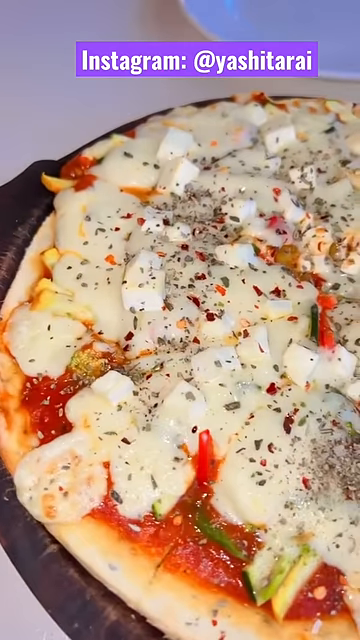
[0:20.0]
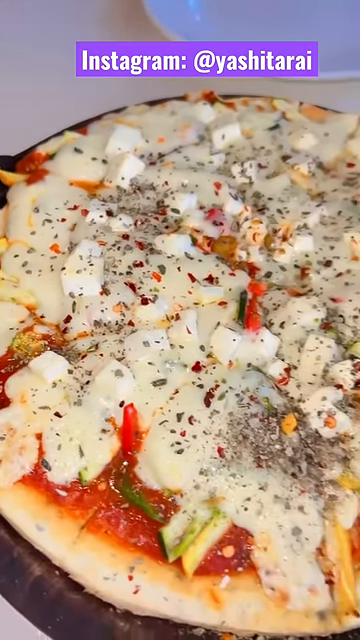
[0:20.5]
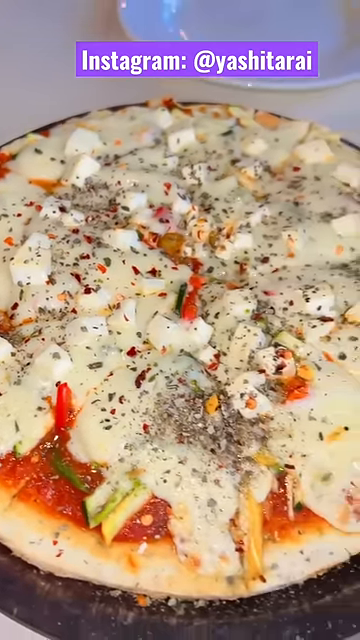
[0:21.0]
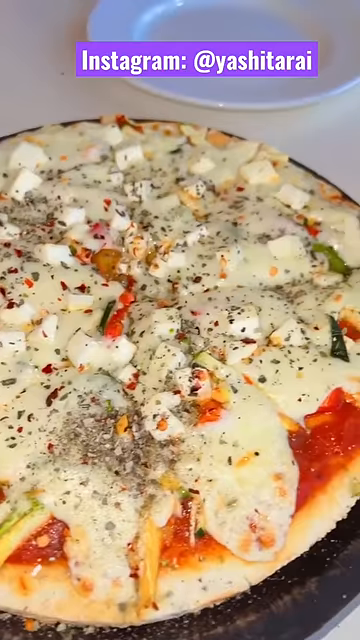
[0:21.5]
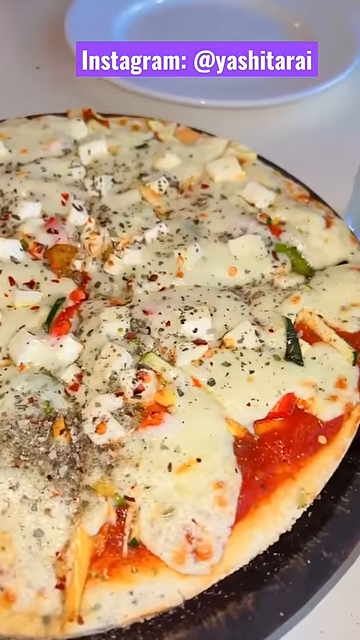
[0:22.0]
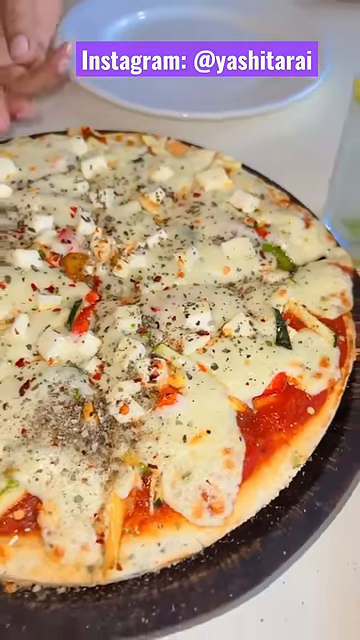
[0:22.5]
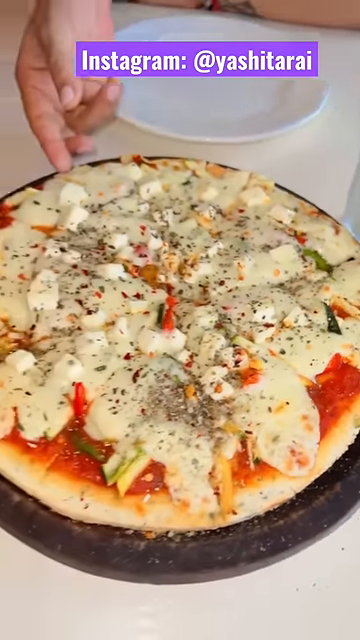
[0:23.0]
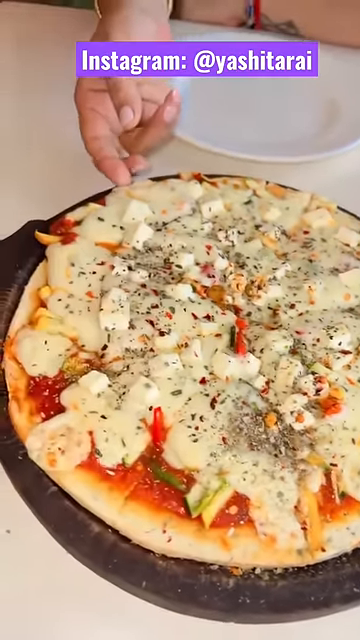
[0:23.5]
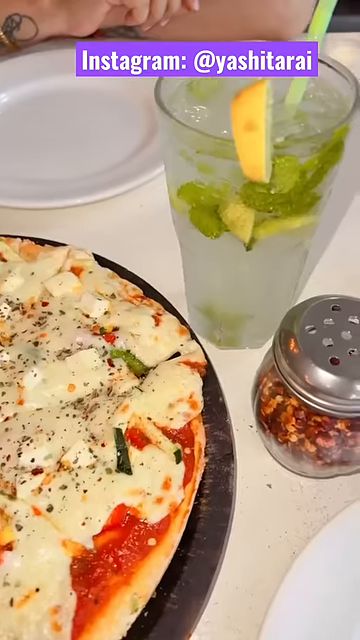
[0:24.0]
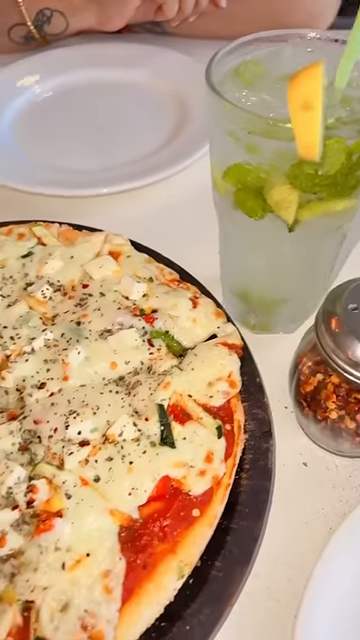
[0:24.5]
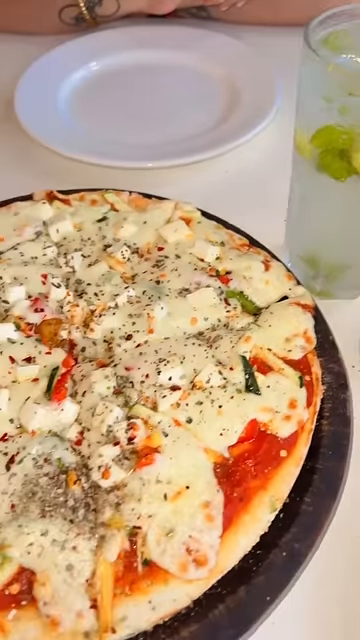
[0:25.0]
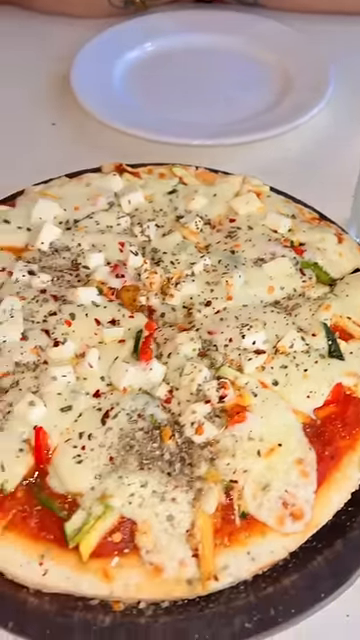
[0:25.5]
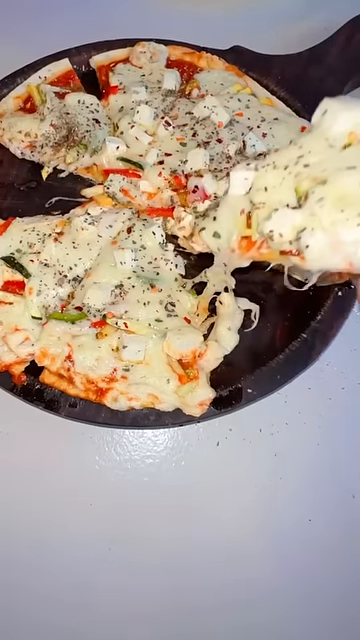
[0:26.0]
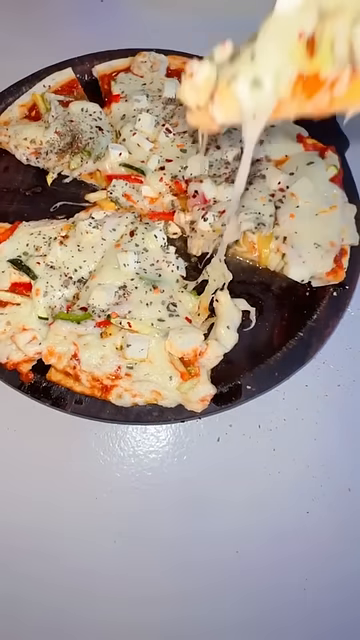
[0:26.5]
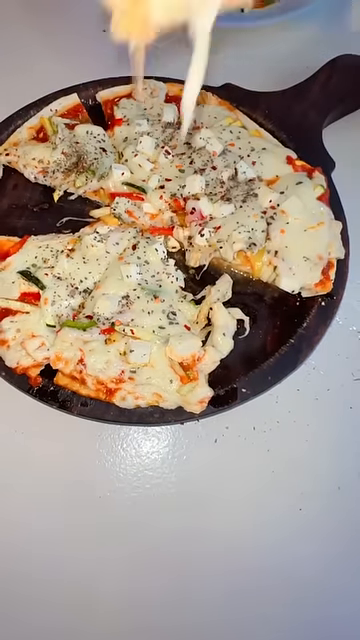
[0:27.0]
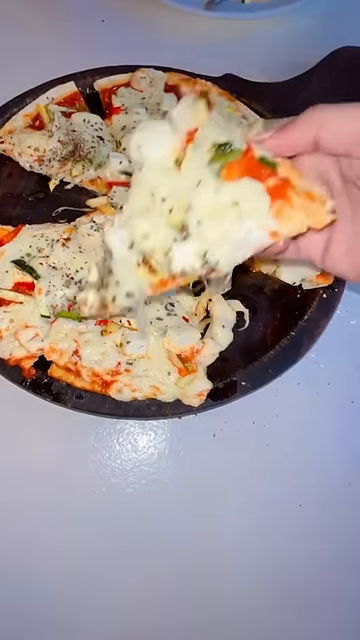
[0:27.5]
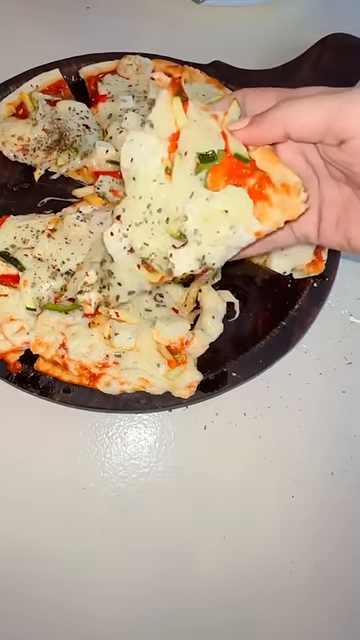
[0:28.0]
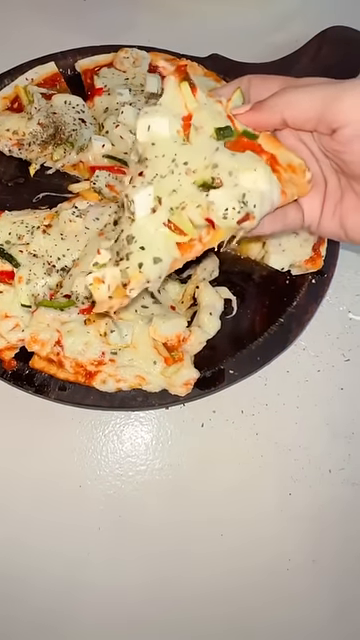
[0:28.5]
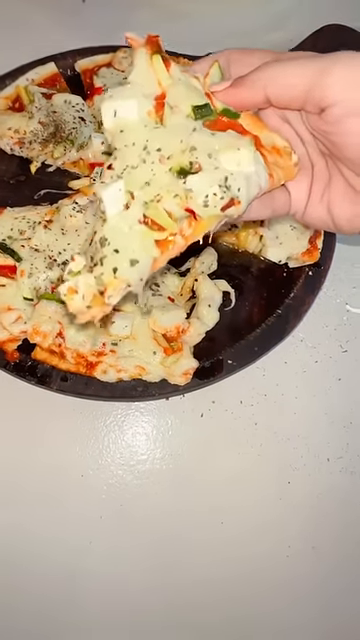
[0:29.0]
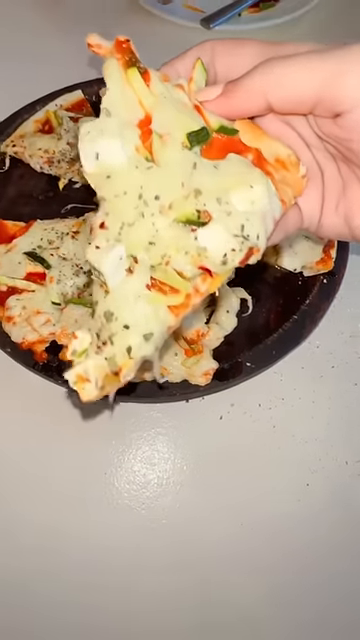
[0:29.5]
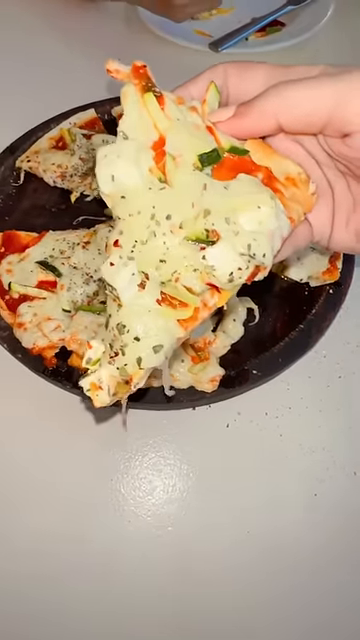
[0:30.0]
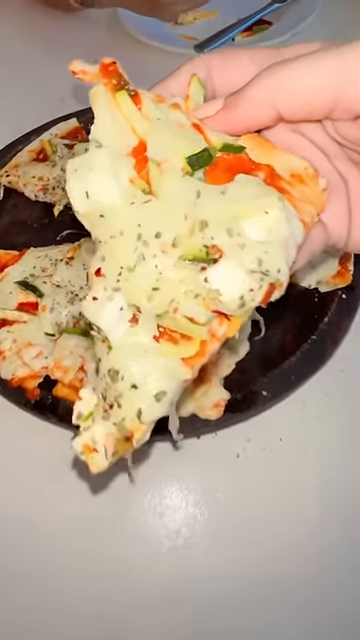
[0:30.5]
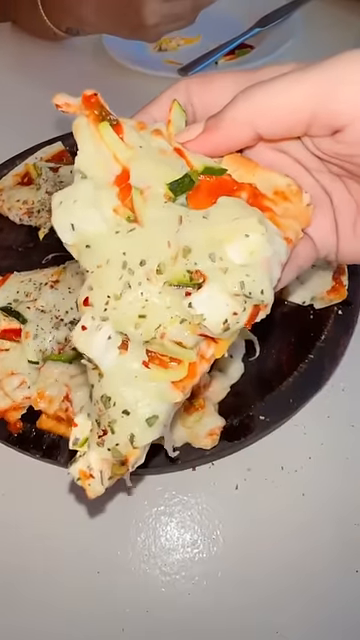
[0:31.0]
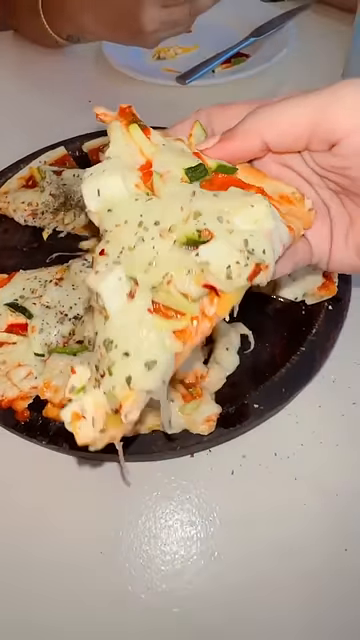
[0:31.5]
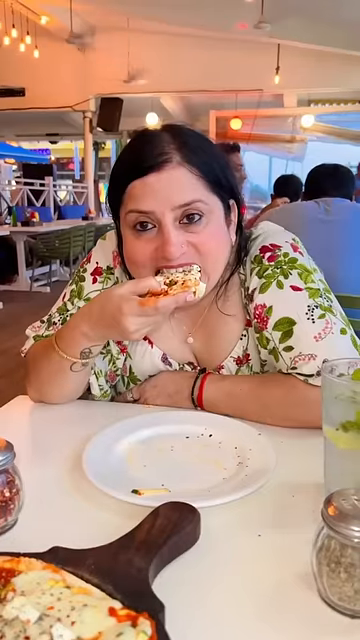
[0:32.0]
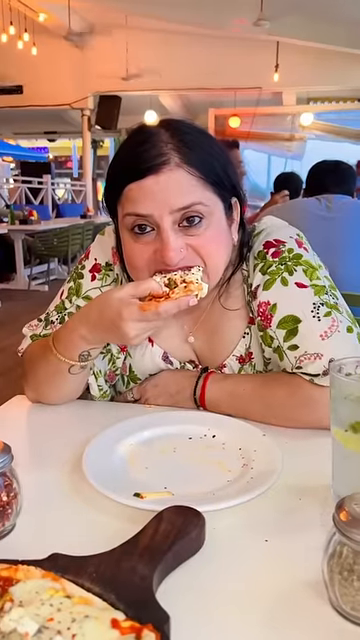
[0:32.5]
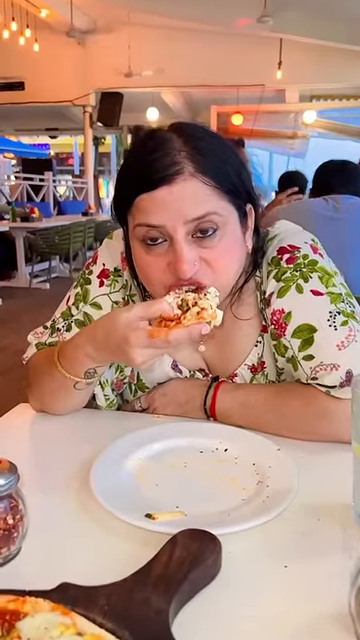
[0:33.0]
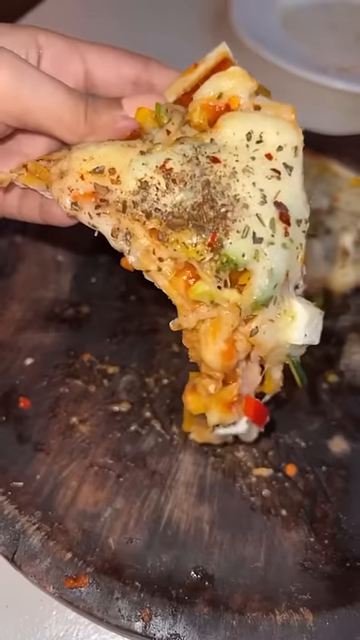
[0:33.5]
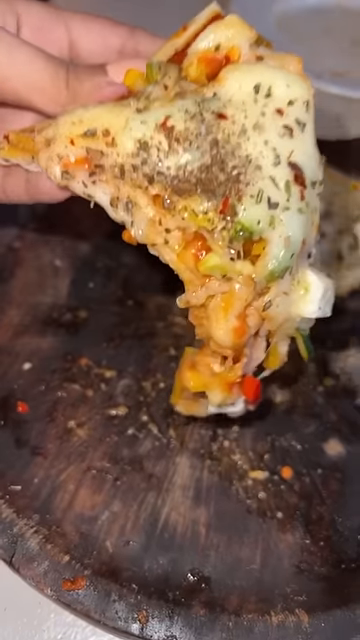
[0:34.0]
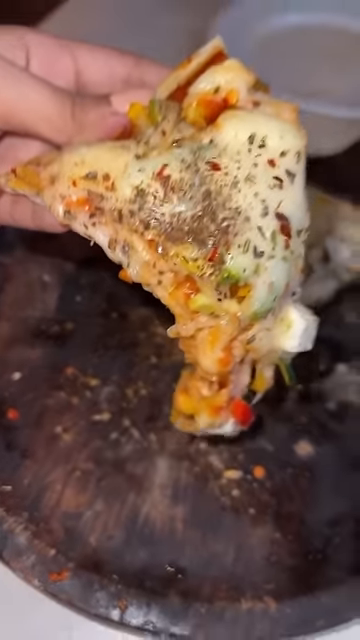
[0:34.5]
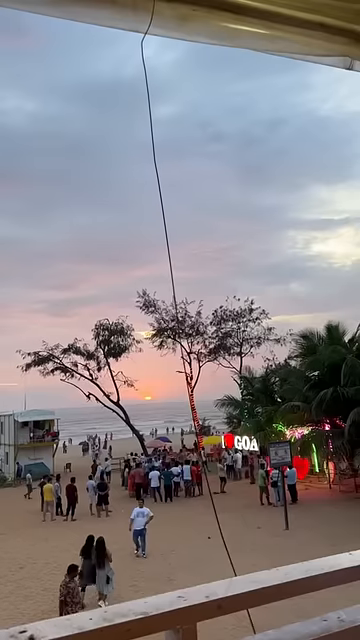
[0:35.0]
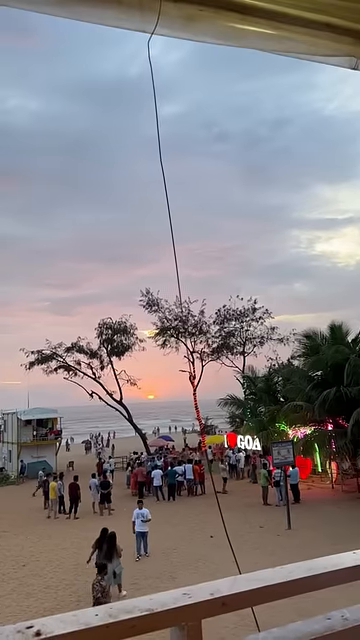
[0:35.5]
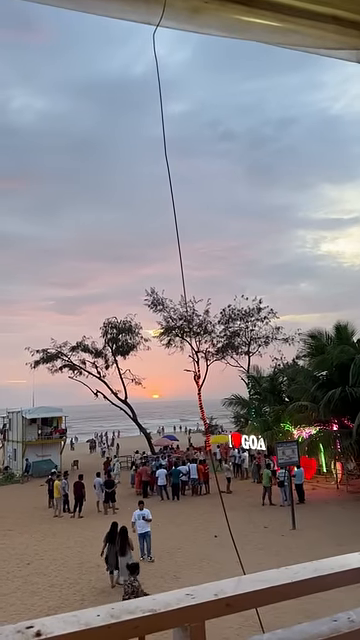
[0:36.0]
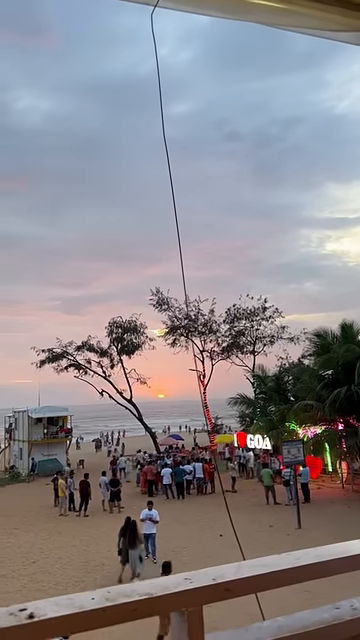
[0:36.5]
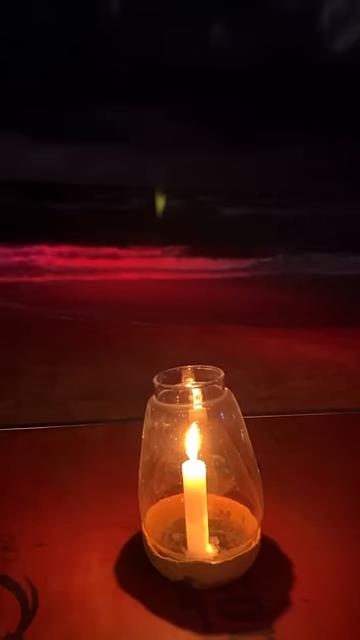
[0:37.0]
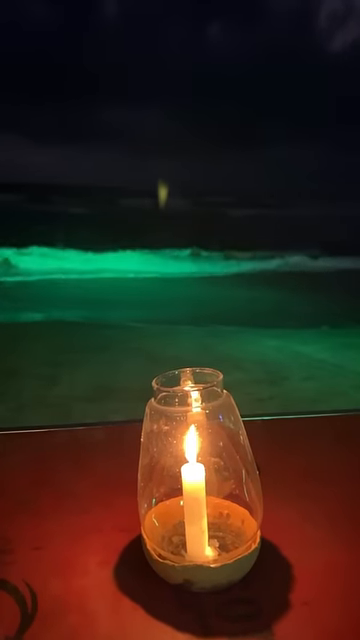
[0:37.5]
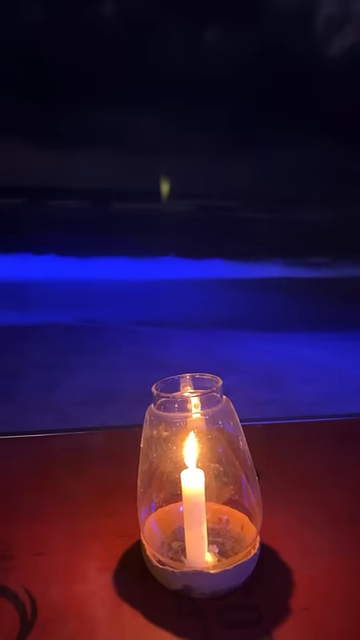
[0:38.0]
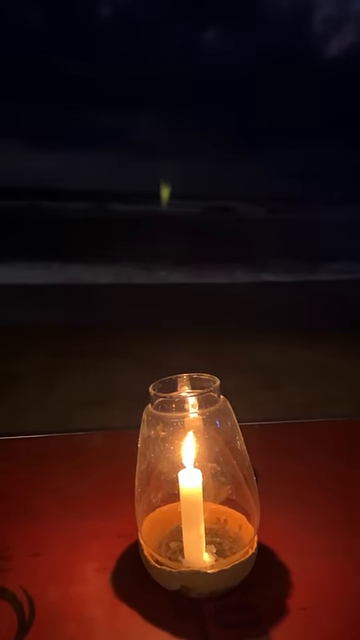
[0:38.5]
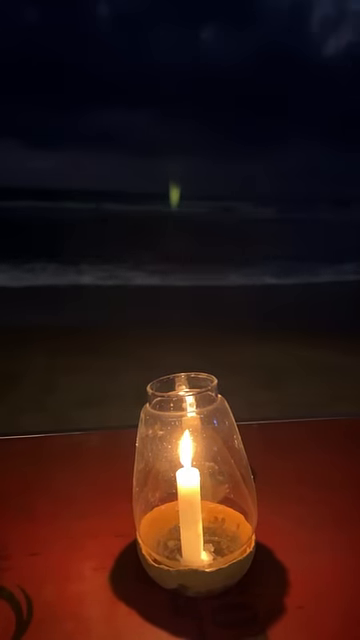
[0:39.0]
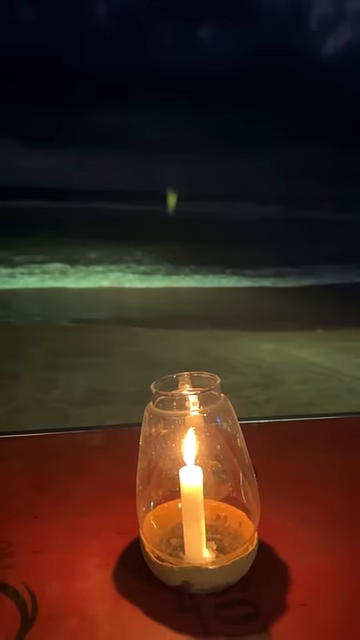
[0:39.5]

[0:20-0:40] A close-up shows an entire pizza in a cast iron skillet on a table, along with a beverage with lemon and lime in it and a small dispenser with red peppers on it for adding to the pizza. The video cuts to the pizza after a few slices have been eaten, and another slice is pulled out to show how stringy and melted the cheese is, with a brief moment of one of the people taking a bite. Another close-up shows a hand holding a piece of pizza that bends downwards into the pan. The video then cuts to a view outside of a beach in the evening, close to sunset.